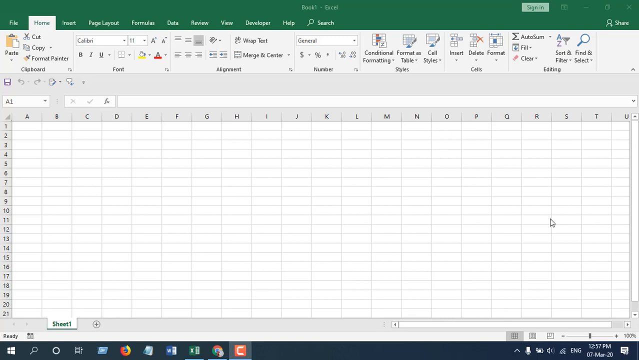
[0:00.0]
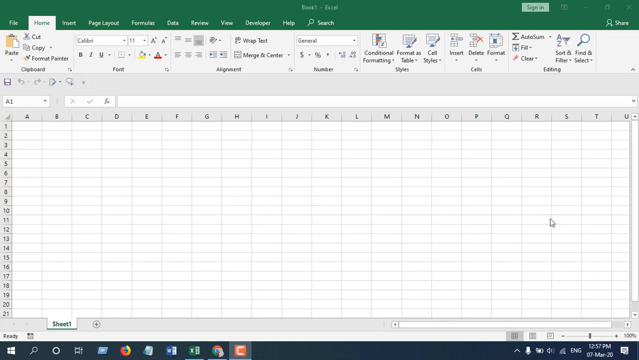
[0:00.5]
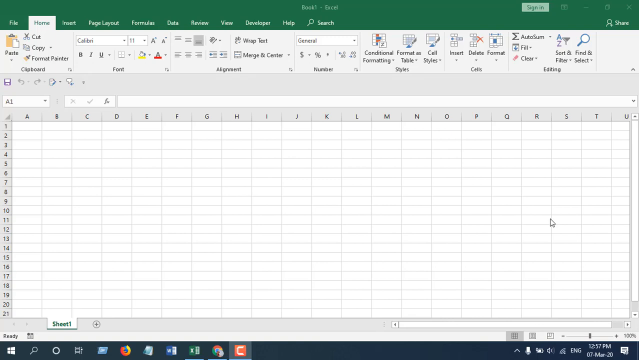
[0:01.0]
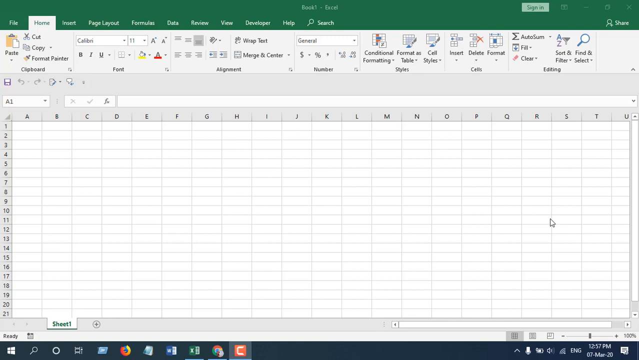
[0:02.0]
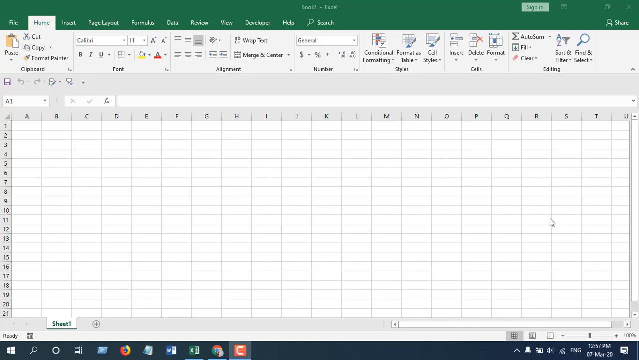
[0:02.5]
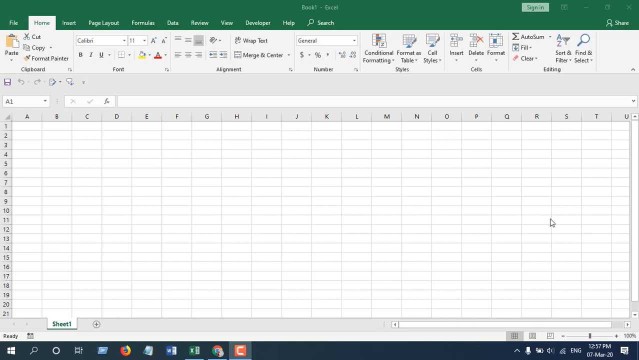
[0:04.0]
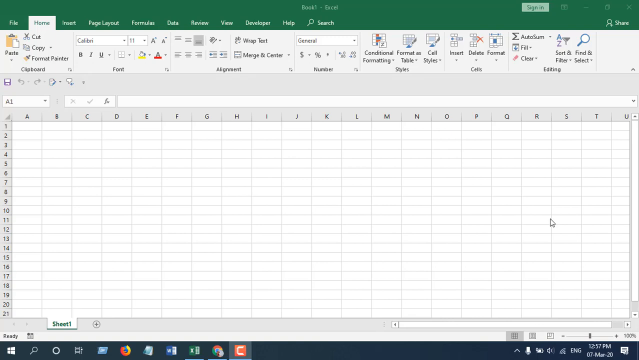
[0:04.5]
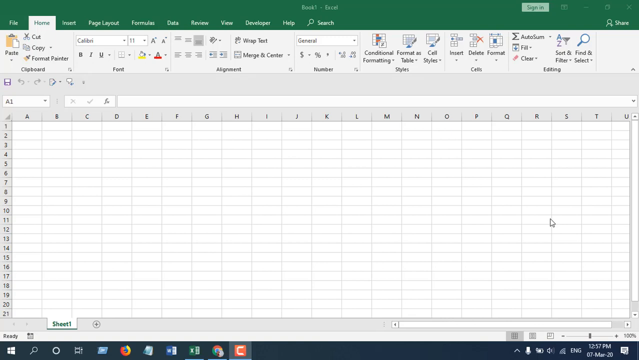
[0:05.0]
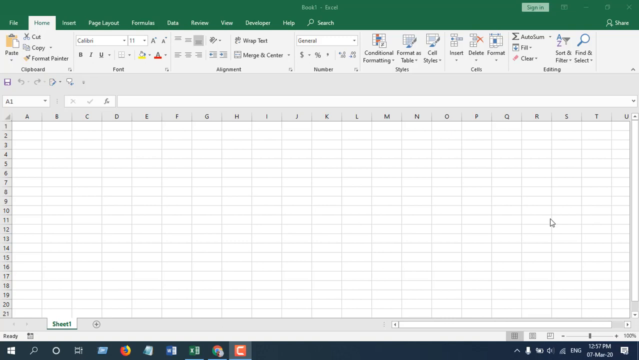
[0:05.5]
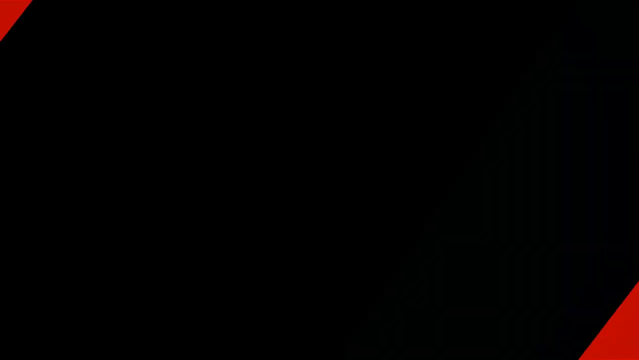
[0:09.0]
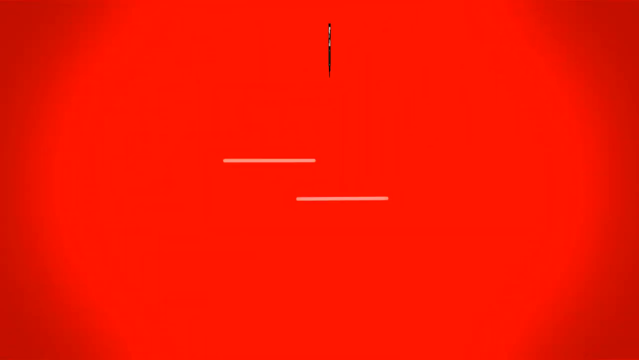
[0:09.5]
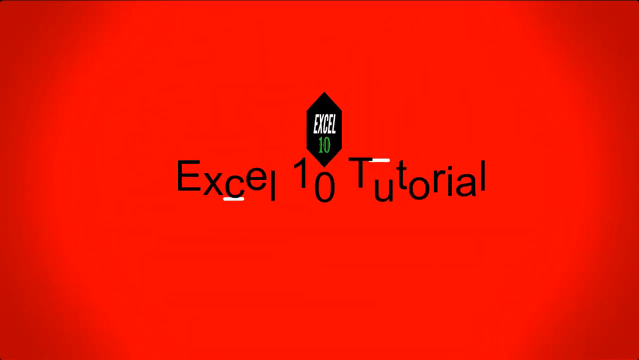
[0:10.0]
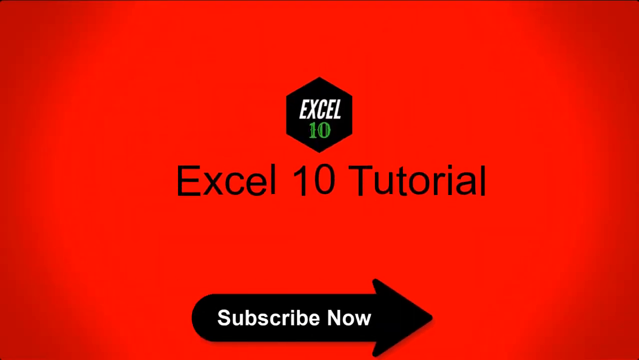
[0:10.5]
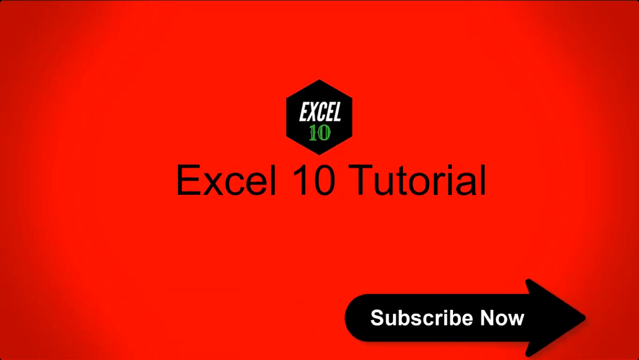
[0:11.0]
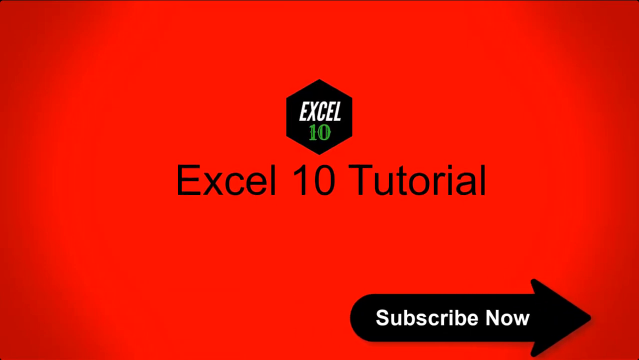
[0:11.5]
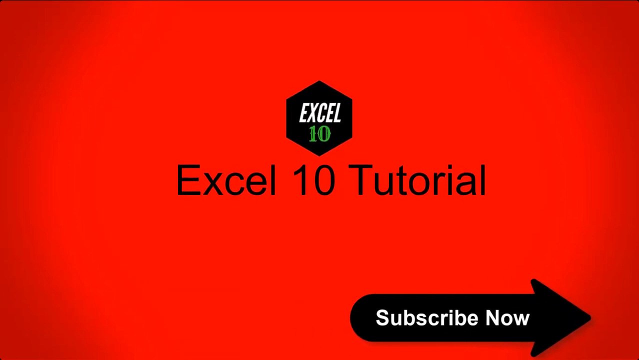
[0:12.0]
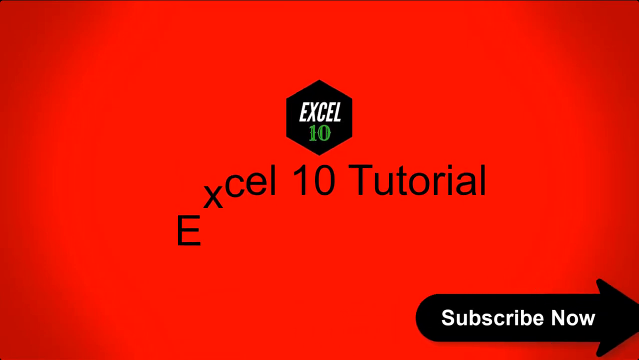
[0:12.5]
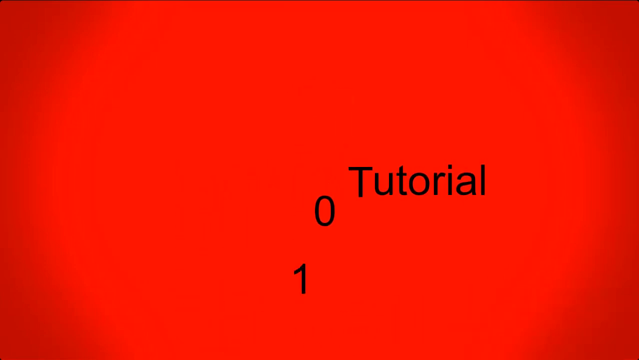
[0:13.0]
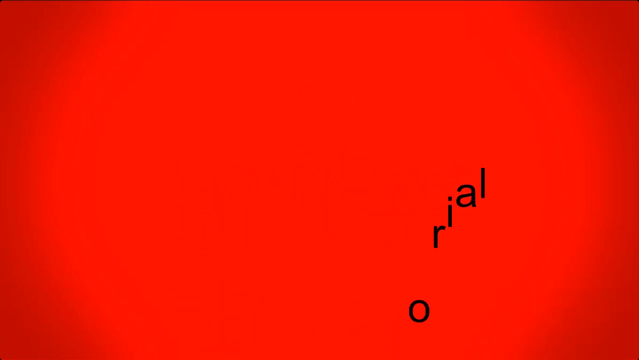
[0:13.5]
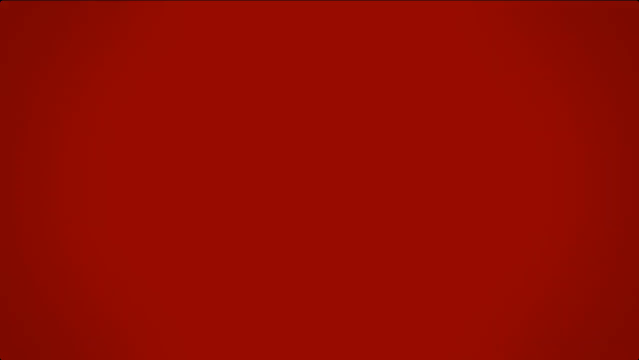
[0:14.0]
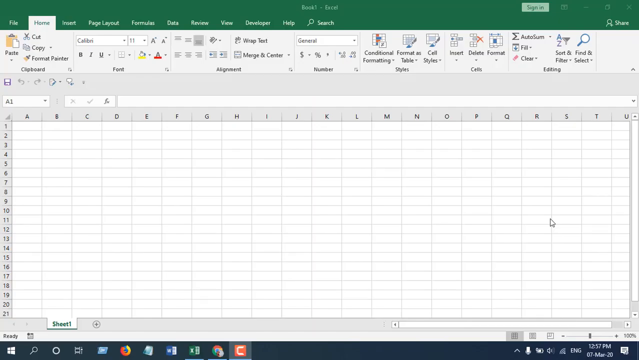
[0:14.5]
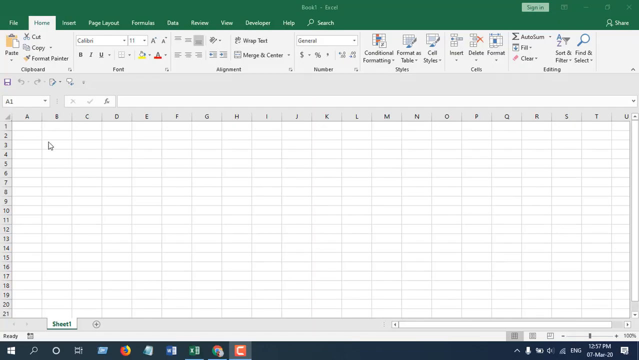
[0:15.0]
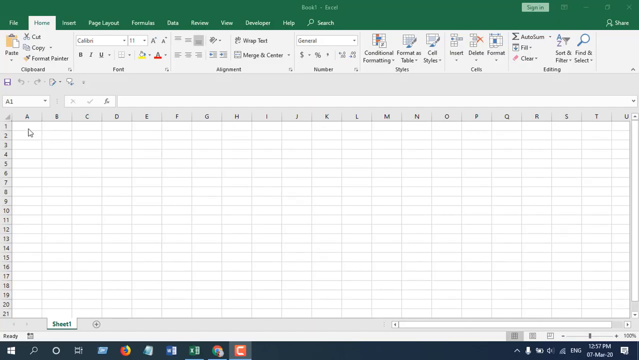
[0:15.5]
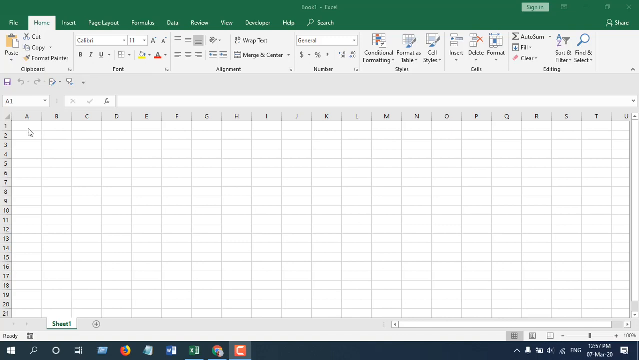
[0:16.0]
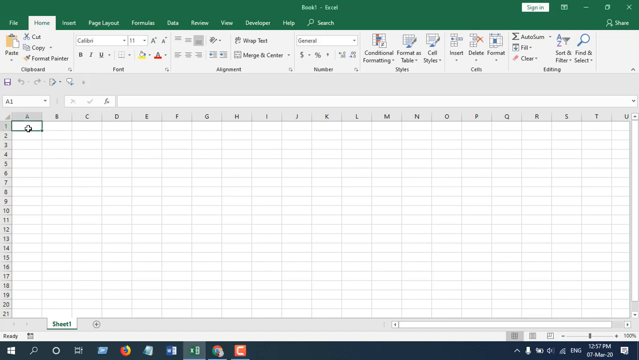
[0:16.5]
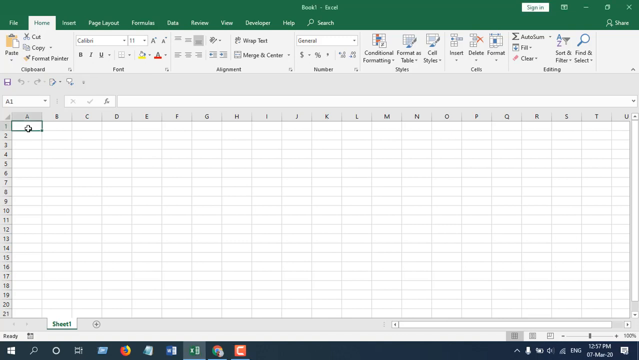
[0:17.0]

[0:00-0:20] The video is a Microsoft Excel tutorial on how to navigate and use Excel.